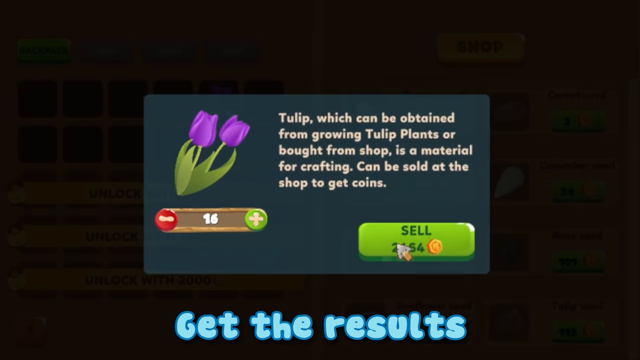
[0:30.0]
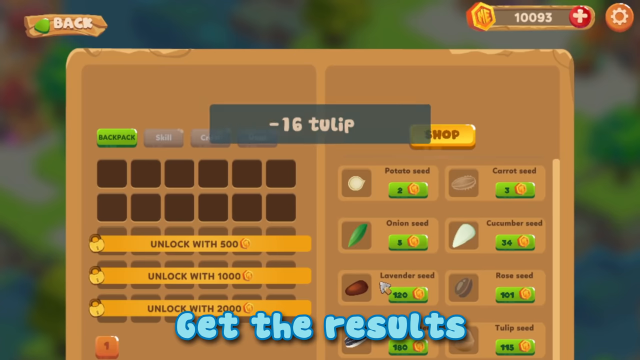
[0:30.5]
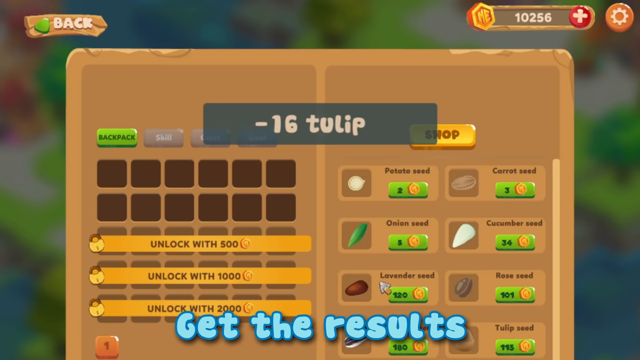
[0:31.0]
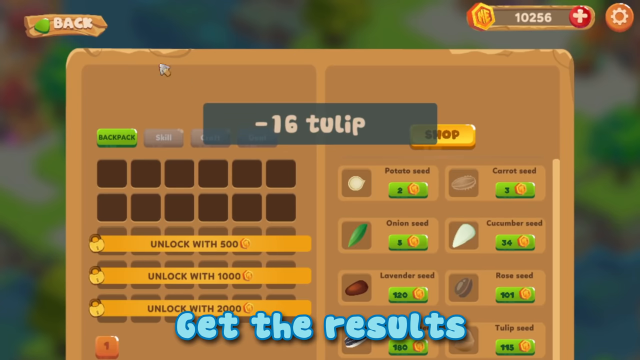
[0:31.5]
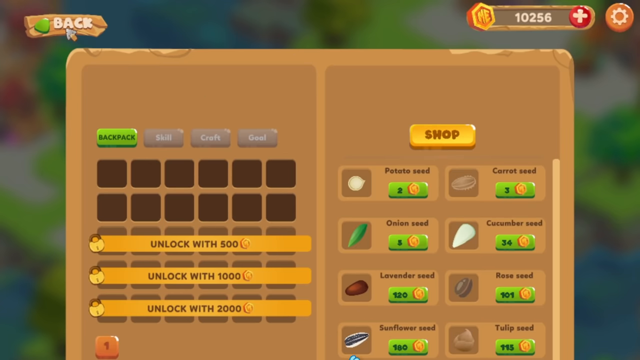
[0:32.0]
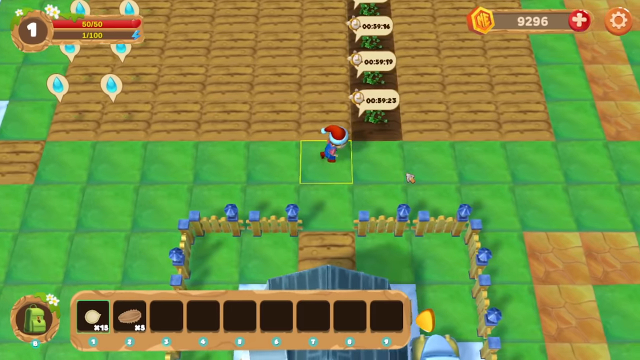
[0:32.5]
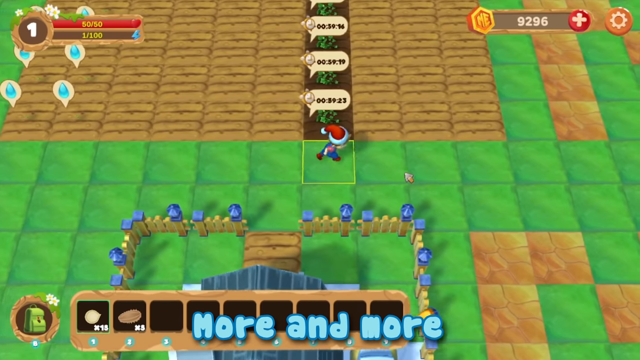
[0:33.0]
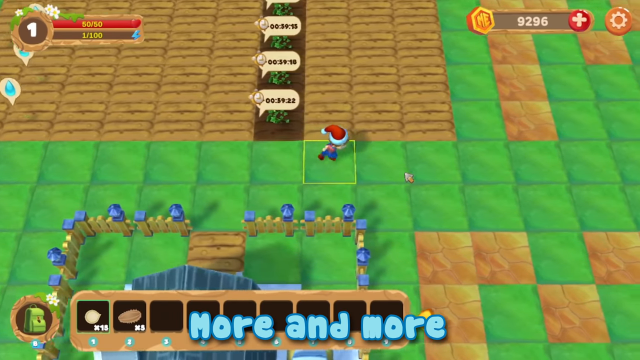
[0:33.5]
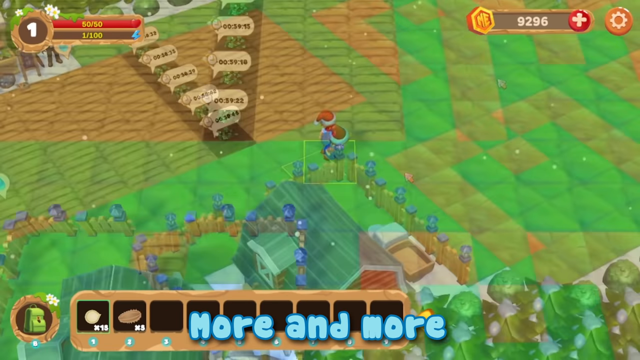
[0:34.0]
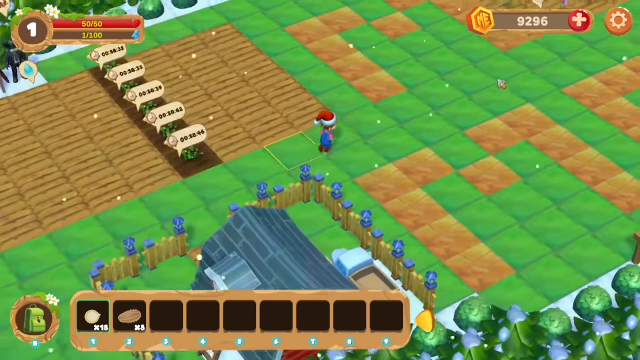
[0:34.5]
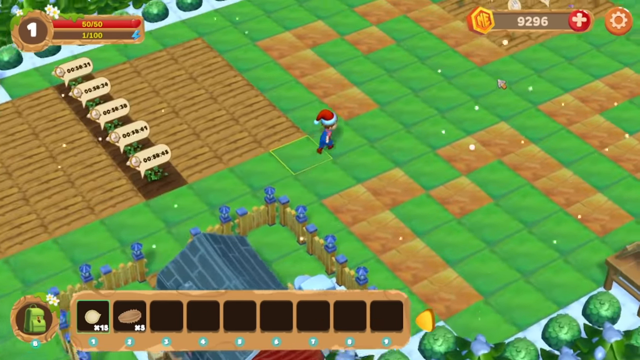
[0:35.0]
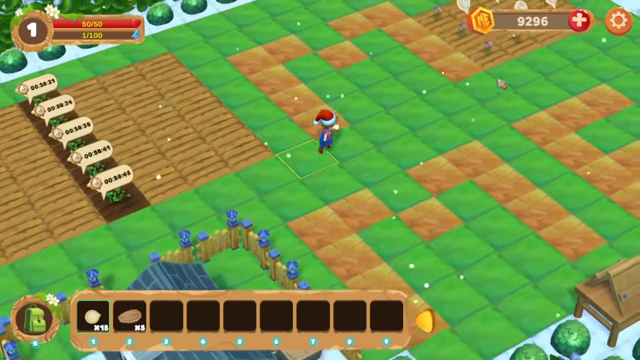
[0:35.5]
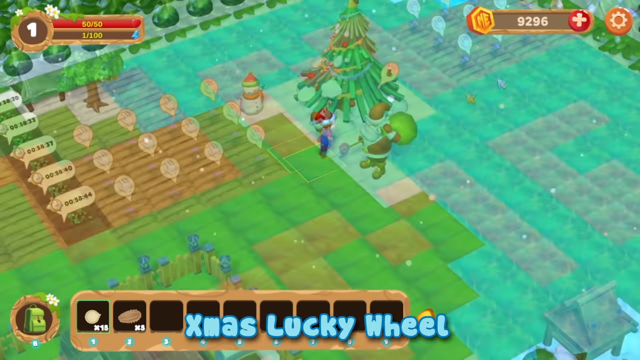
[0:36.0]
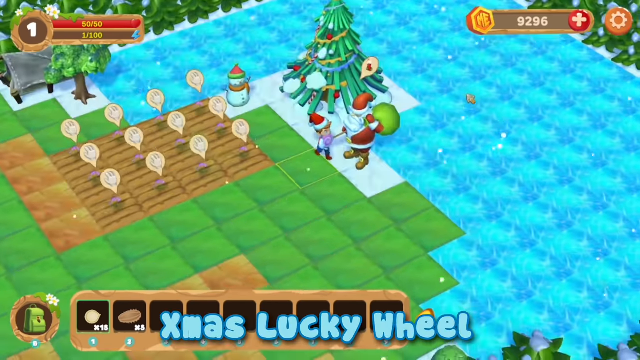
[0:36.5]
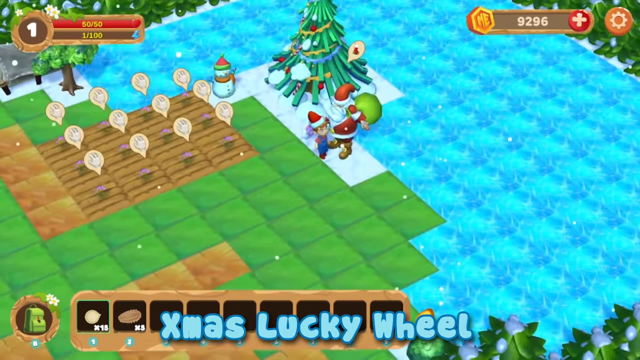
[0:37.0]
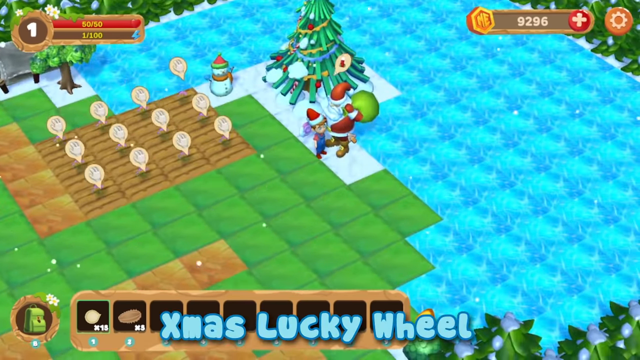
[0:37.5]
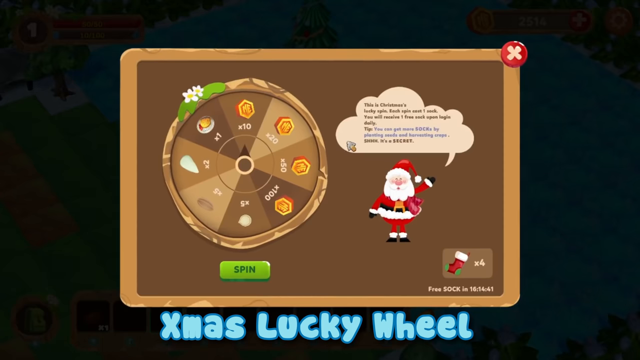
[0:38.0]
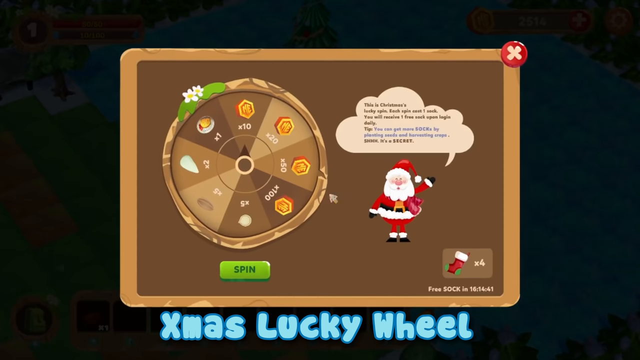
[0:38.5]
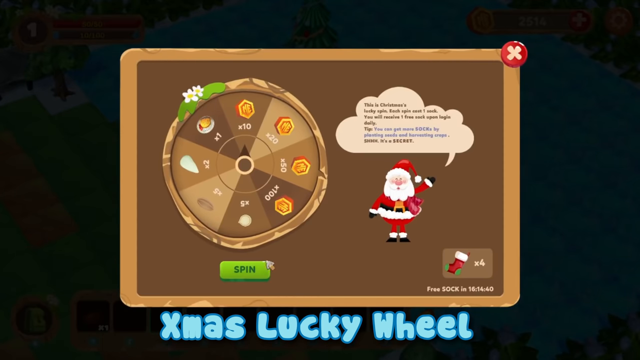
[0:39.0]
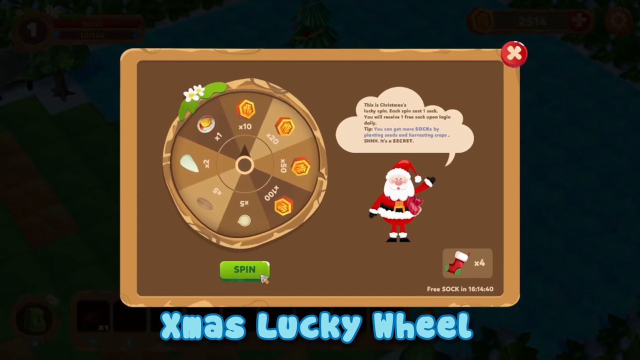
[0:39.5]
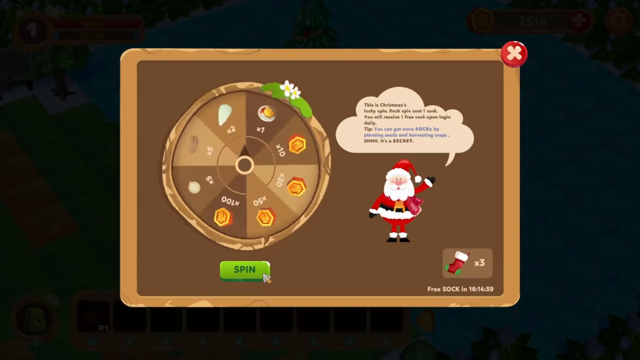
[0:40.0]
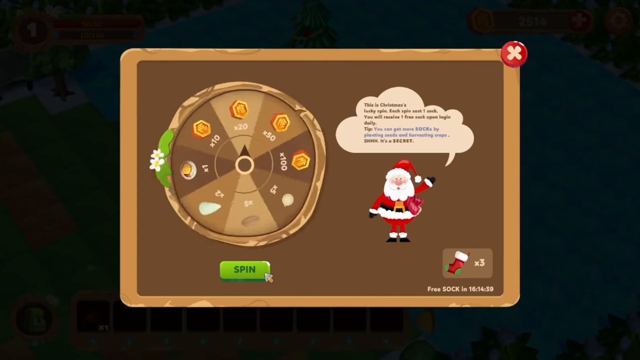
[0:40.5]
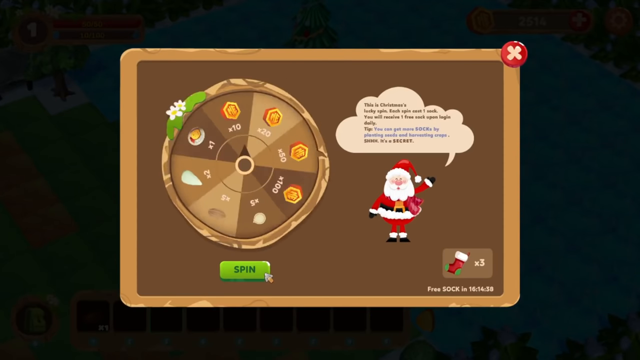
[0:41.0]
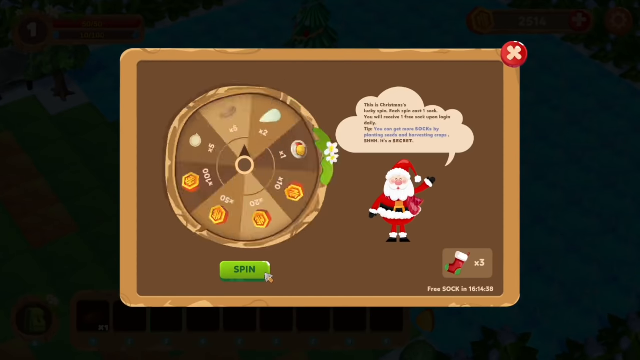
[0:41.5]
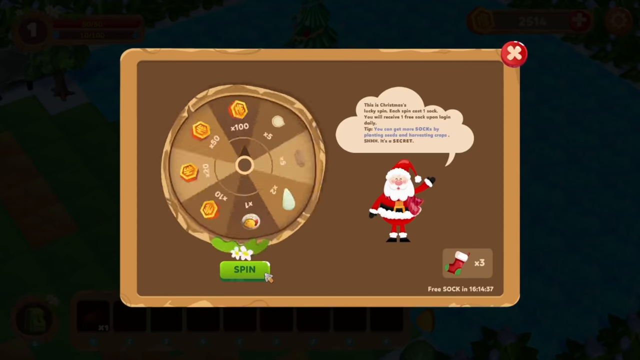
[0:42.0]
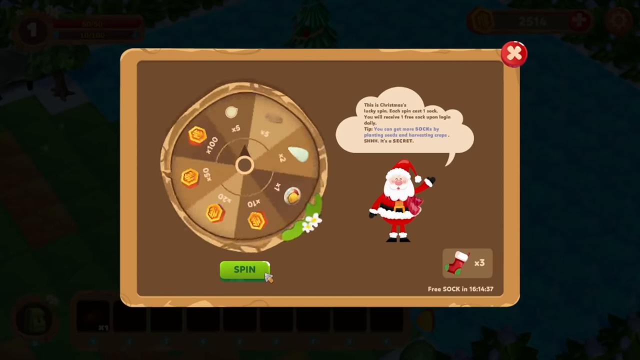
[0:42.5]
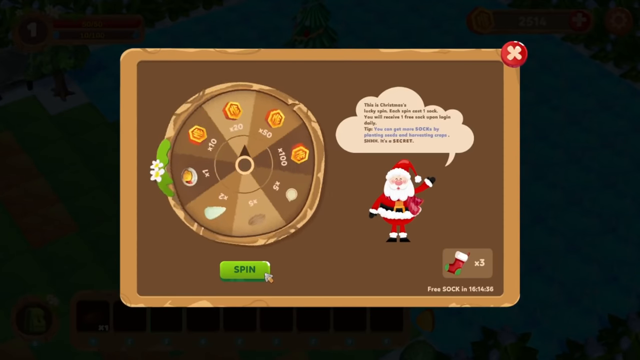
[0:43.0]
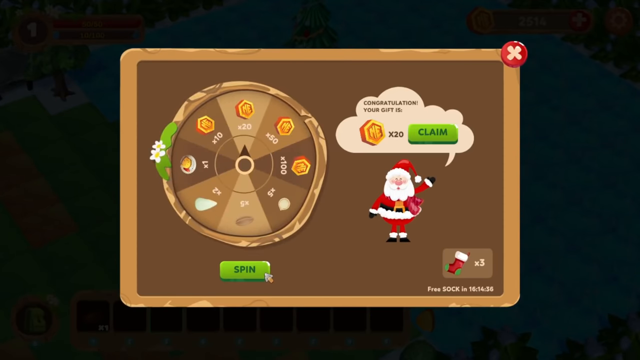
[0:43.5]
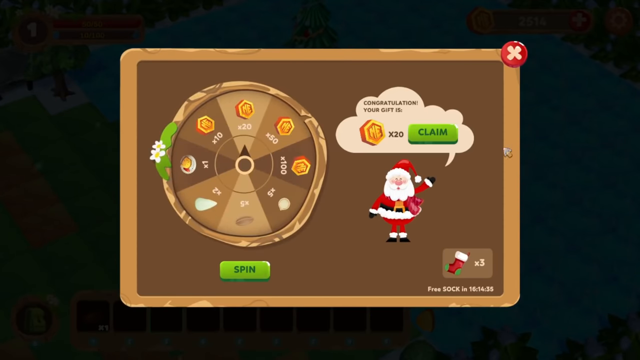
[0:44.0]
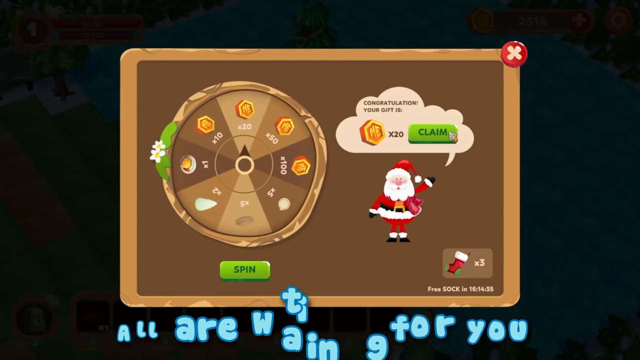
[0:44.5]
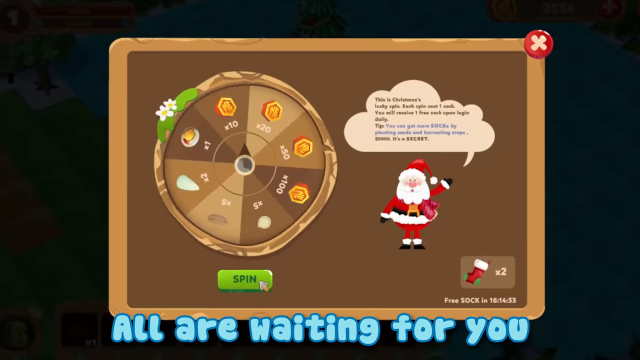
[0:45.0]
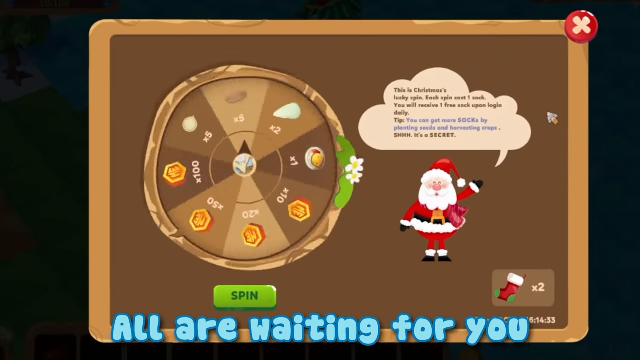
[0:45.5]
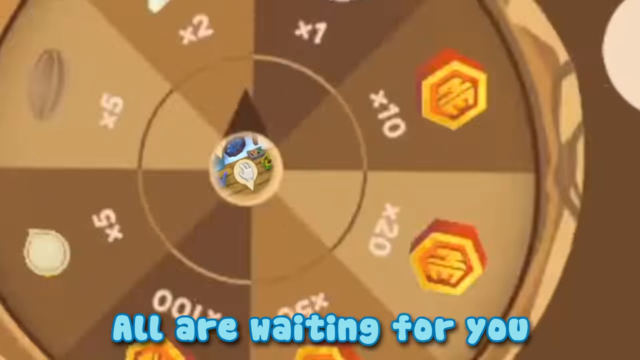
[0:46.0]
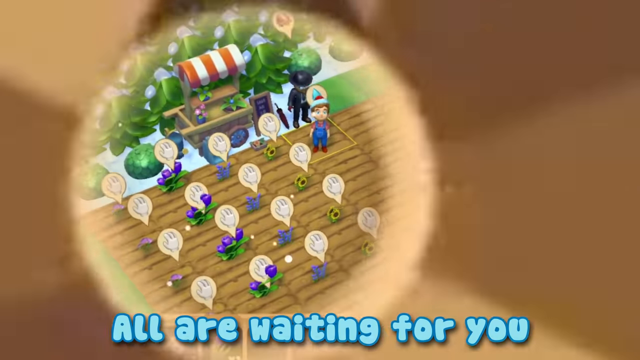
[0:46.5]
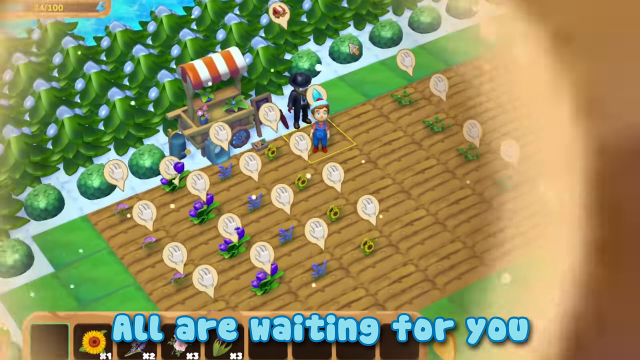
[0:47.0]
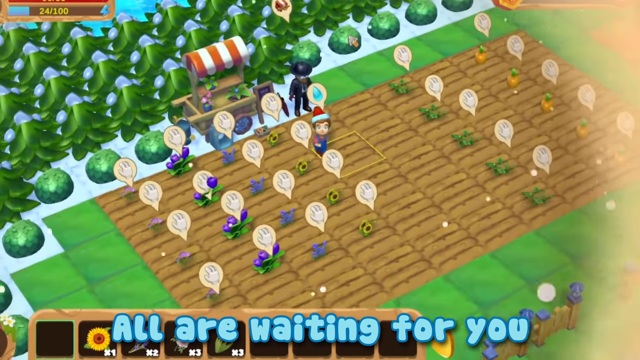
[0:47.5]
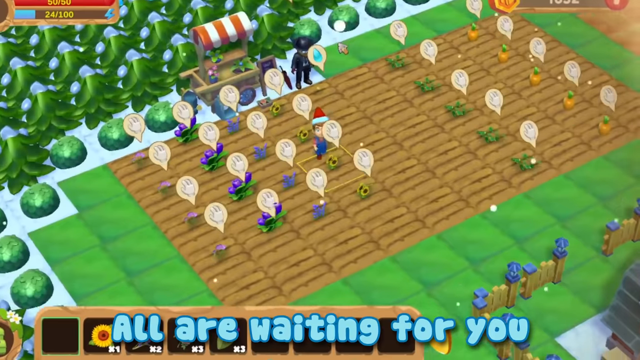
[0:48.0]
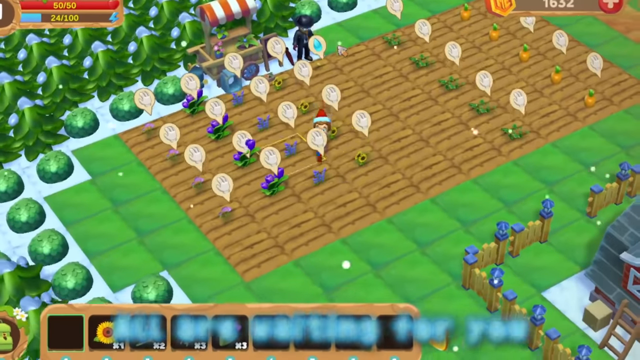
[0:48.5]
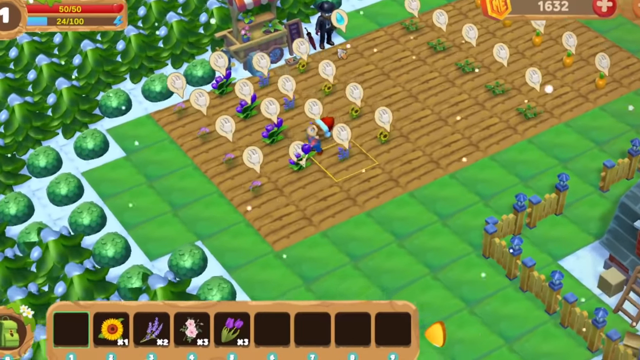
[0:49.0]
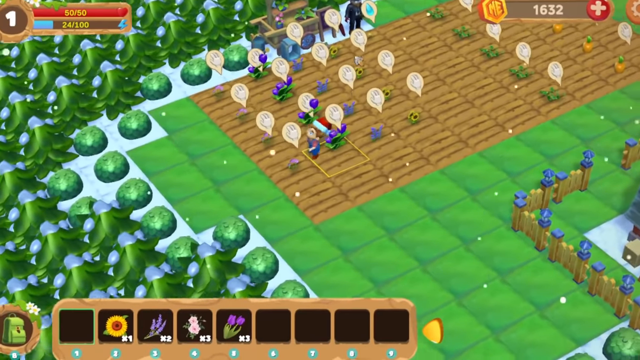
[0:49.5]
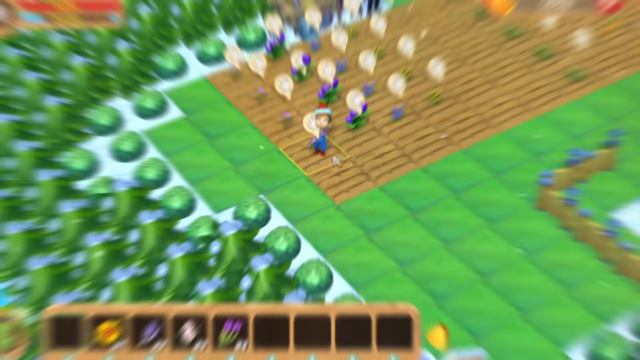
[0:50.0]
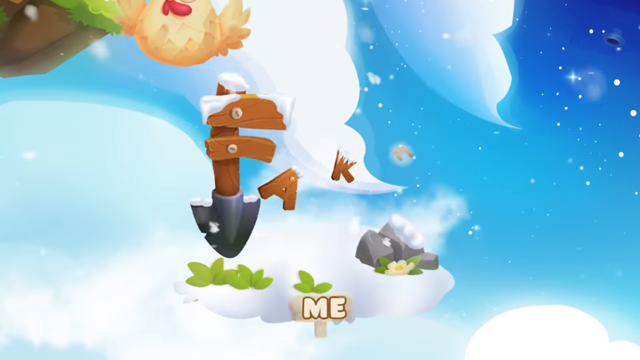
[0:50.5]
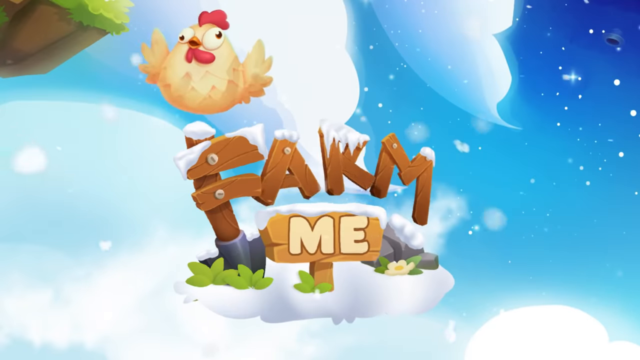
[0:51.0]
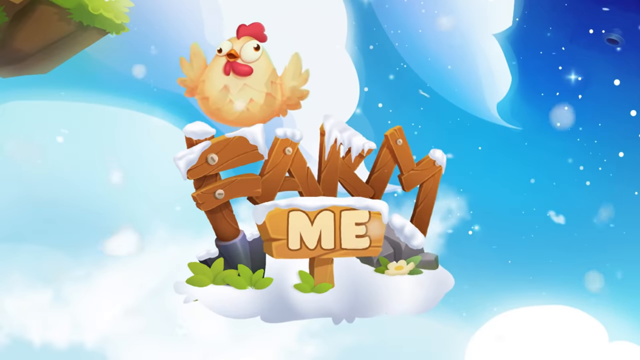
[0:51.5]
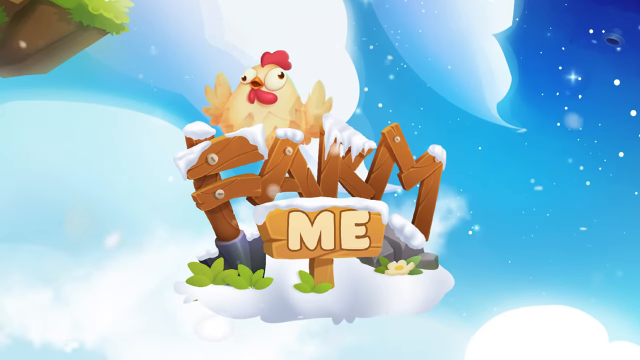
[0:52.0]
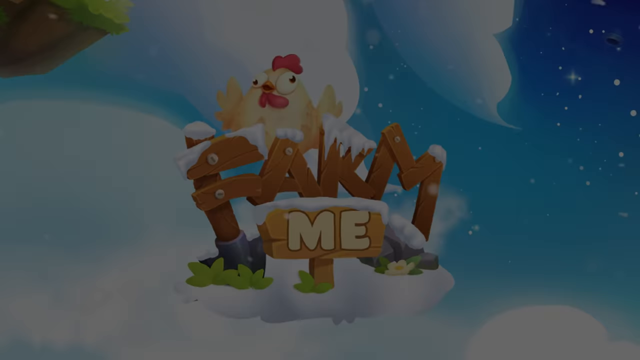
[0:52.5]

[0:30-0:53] The player looks like they are selling tulips, about 16 of them. Text reads "tulip which can be obtained from growing tulip plants or brought from shop is a material for crafting can be sold at the shop to get coins", and the 16 tulips are sold. The player then runs around the farm, still walking, and reaches a Santa Claus thing labeled "Christmas's lucky spin", with text saying "you receive one free sack upon login daily". The player spins the wheel and the text says "congratulations", with a reward of 20 coins. The view returns to the farm, where the player is looking at carrots for their plants.